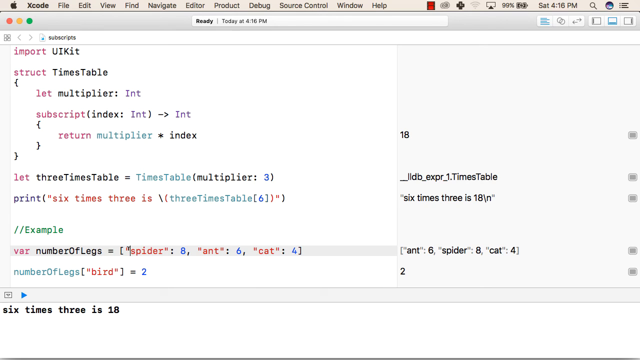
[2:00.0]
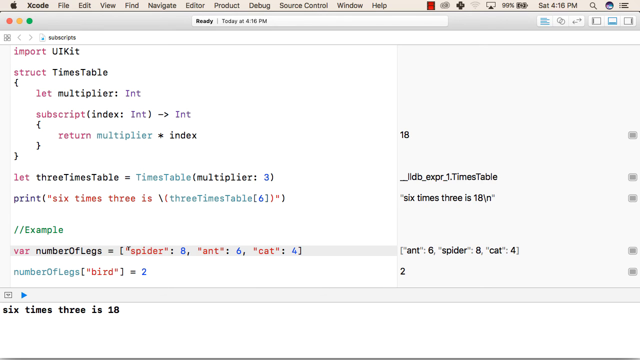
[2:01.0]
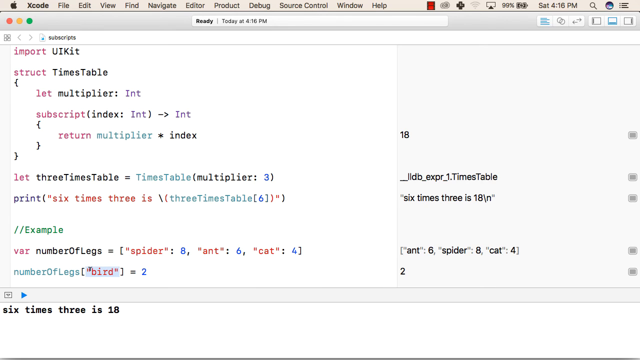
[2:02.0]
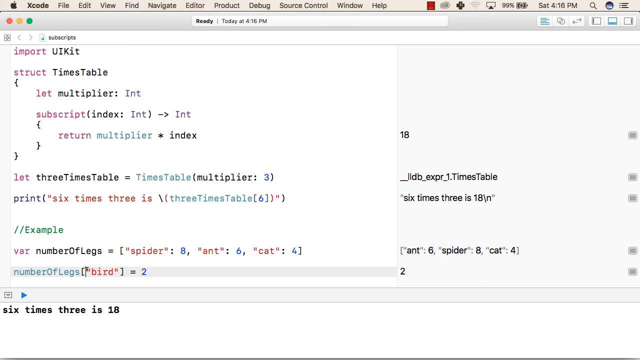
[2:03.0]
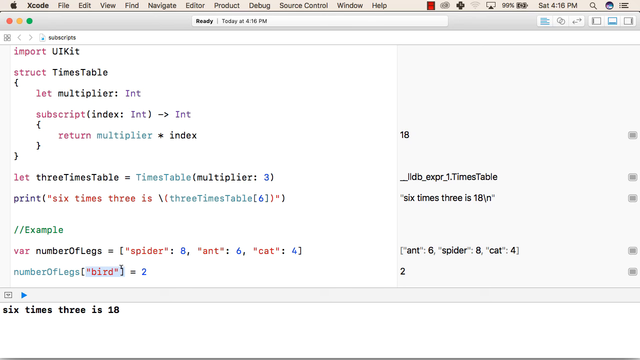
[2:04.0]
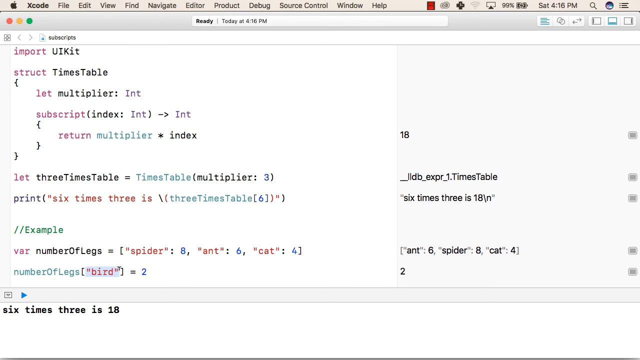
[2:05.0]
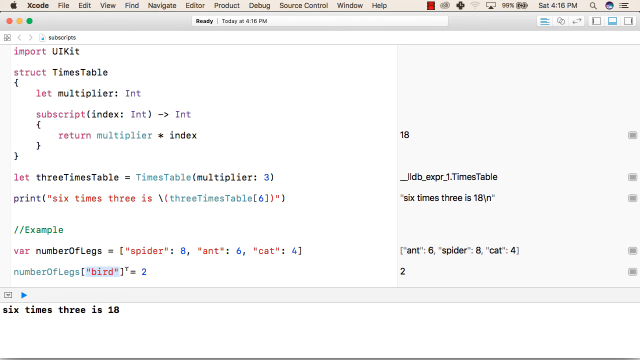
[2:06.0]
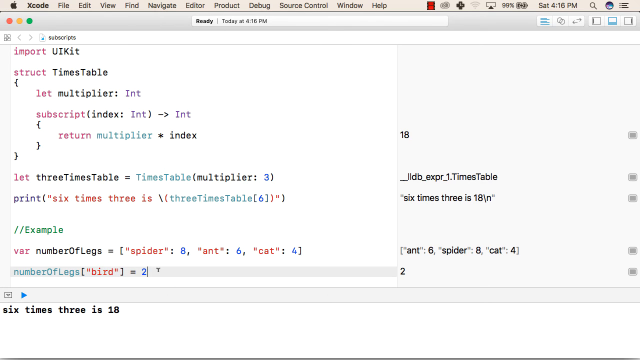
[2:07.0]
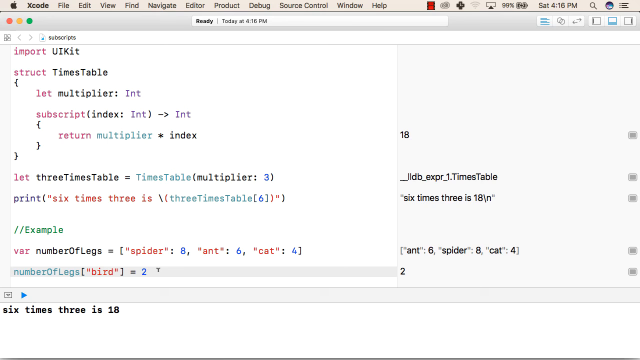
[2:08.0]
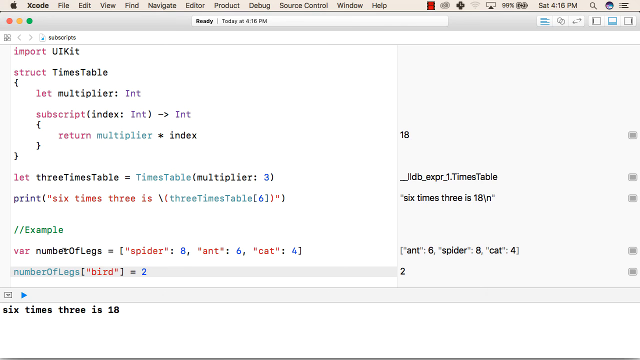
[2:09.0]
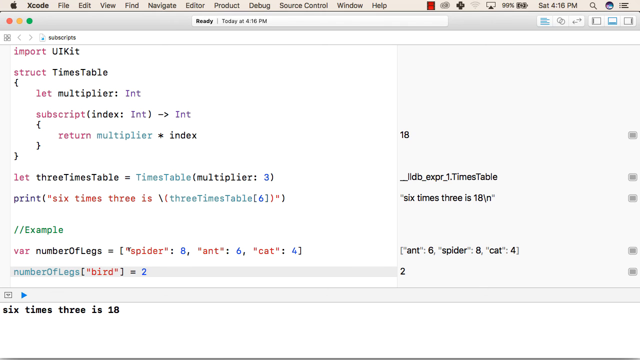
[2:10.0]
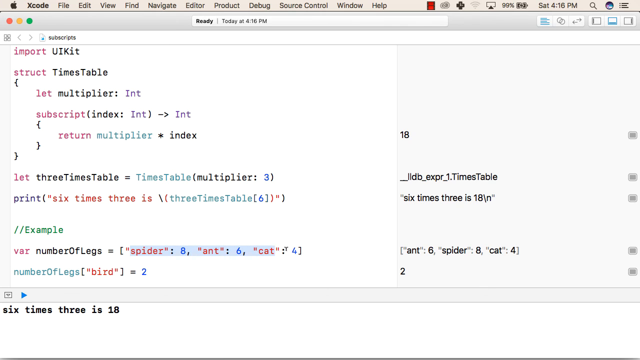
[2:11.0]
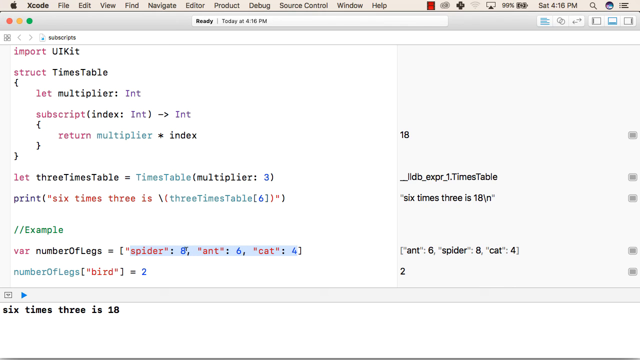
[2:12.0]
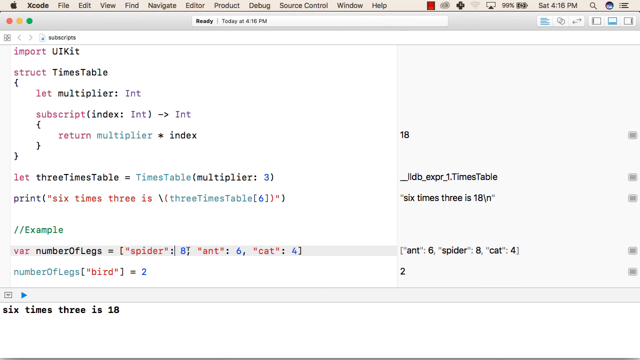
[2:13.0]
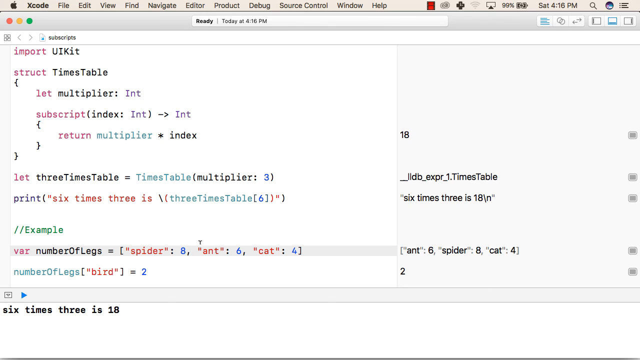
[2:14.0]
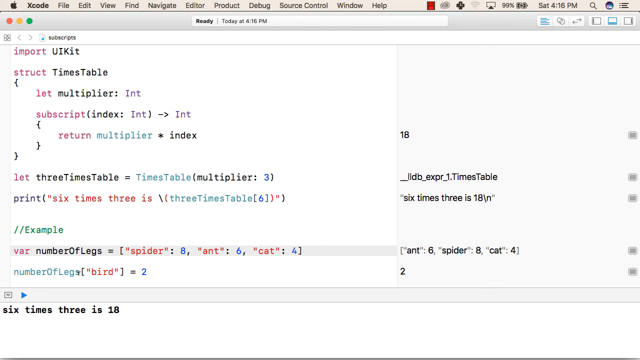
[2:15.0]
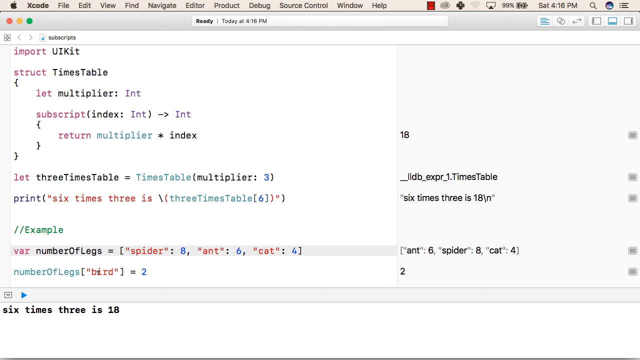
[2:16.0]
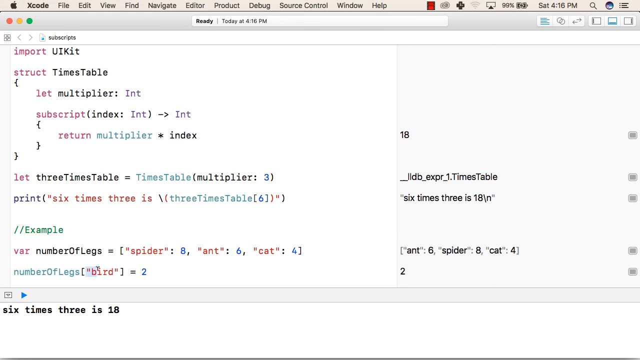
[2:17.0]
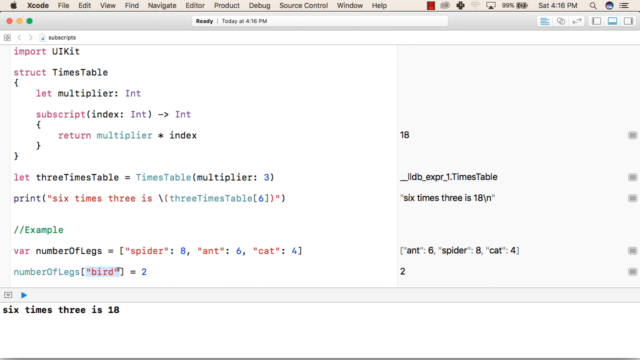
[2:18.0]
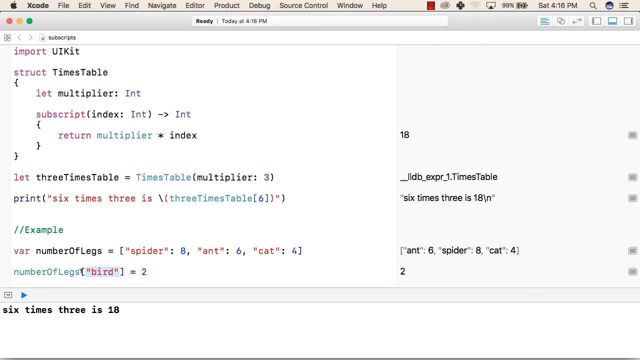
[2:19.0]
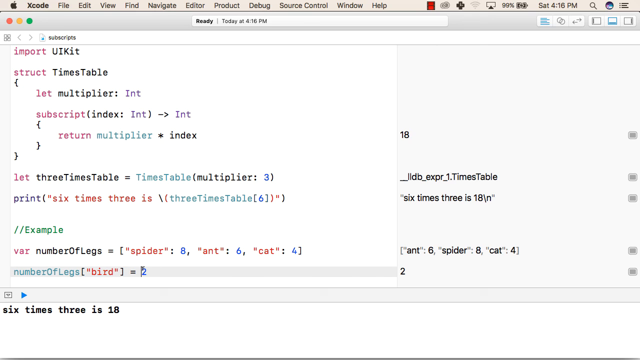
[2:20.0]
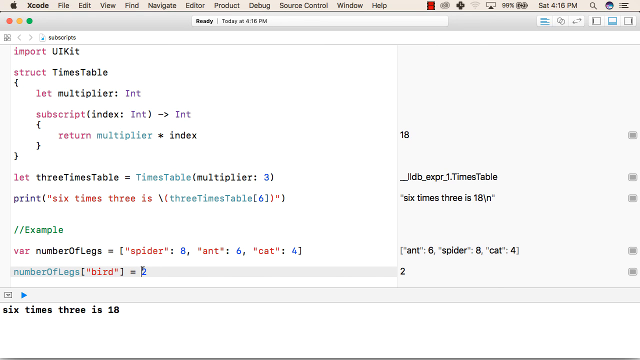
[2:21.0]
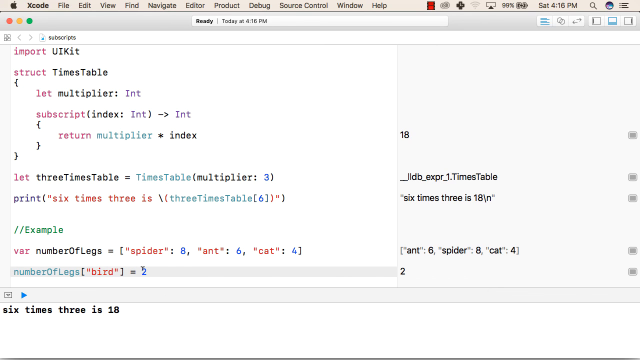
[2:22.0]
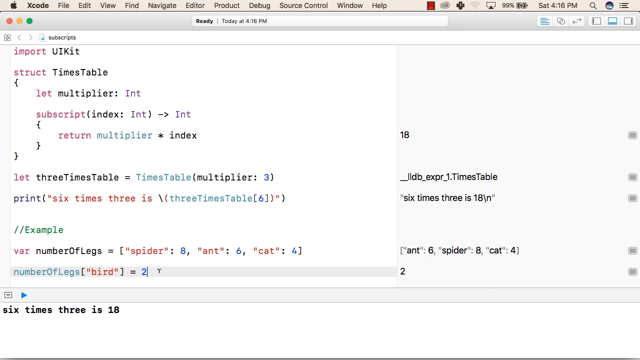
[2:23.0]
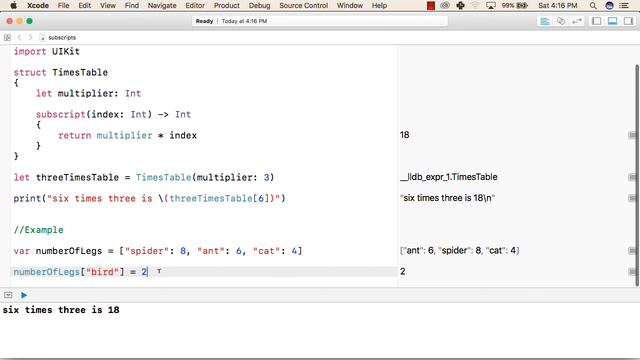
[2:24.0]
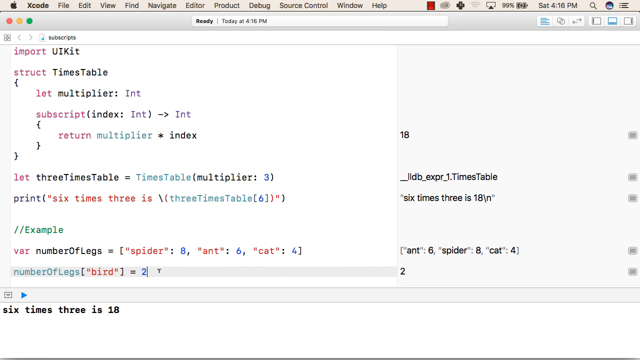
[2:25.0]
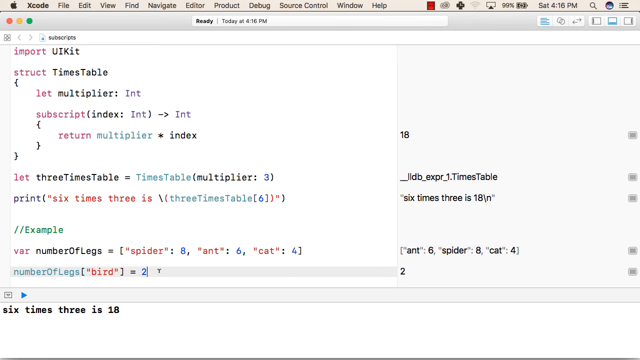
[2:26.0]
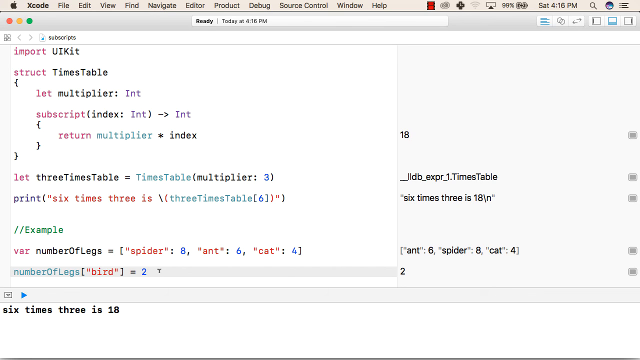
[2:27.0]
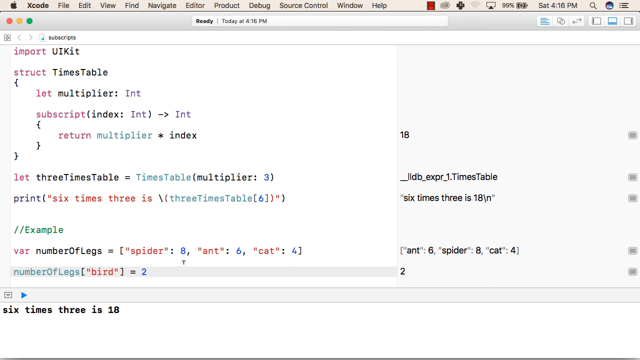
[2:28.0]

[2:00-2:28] Xcode is shown on an Apple computer, with the menus File, Edit, View, Find, Navigate, Editor, Product, Debug, Source Control, Window, and Help. The computer is charged to 99%, and the screen shows Saturday afternoon at 4:16 pm. The subscript example shows it is ready. The code imports UI kit, defines a struct for the timetable, lets a multiplier, includes a subscript that returns the multiplier, lets a three times table using the multiplier, and prints the results.